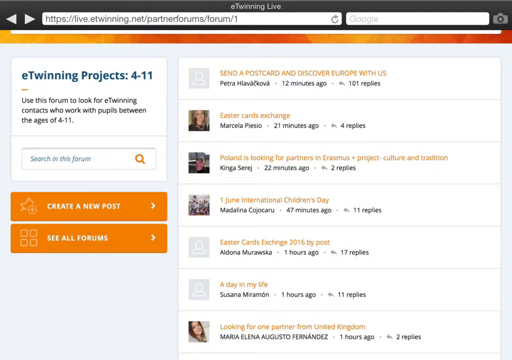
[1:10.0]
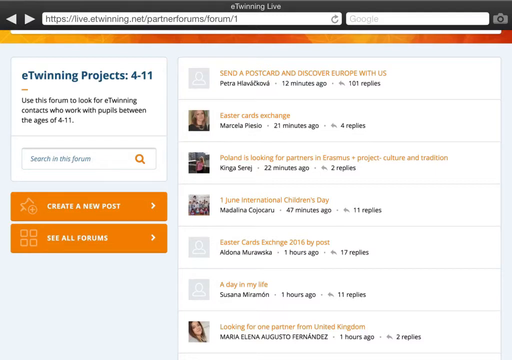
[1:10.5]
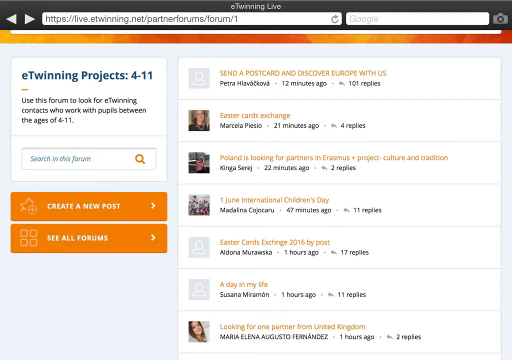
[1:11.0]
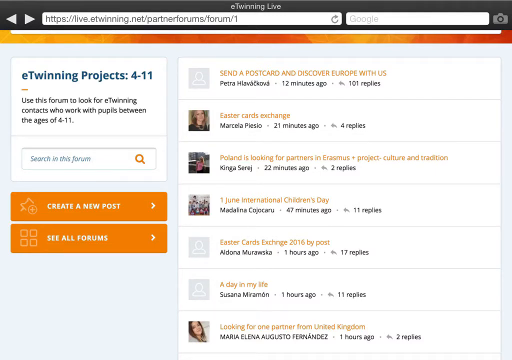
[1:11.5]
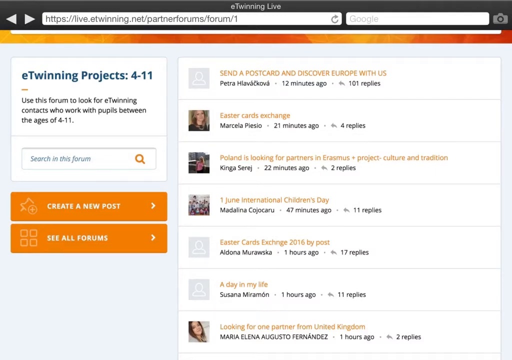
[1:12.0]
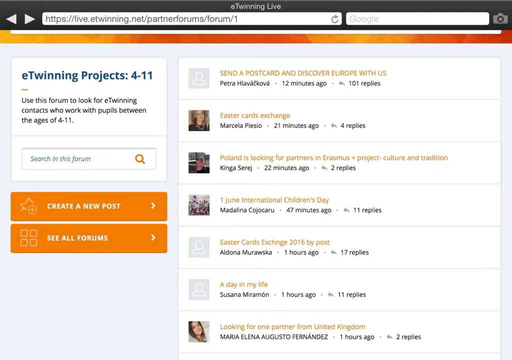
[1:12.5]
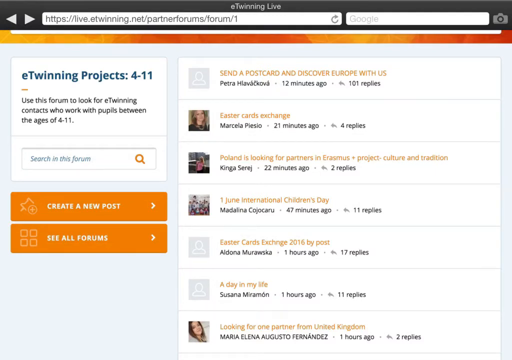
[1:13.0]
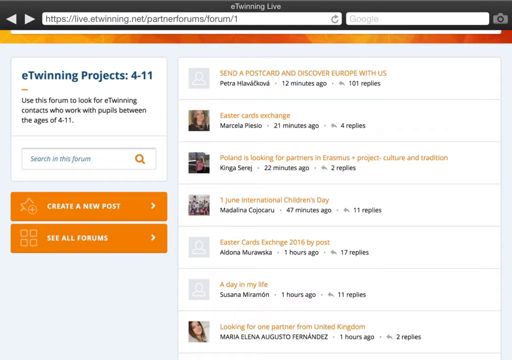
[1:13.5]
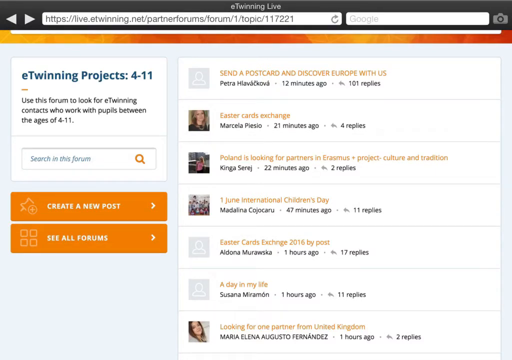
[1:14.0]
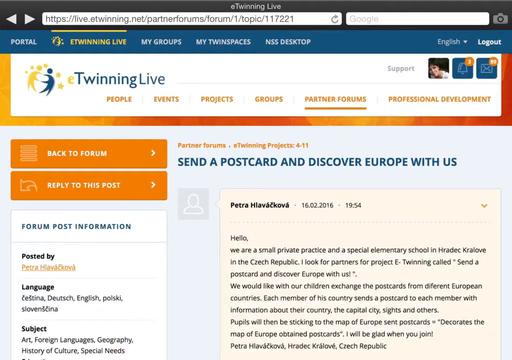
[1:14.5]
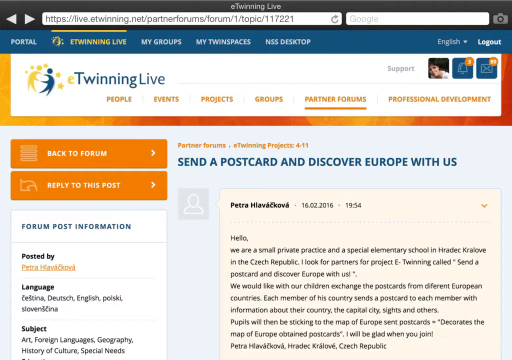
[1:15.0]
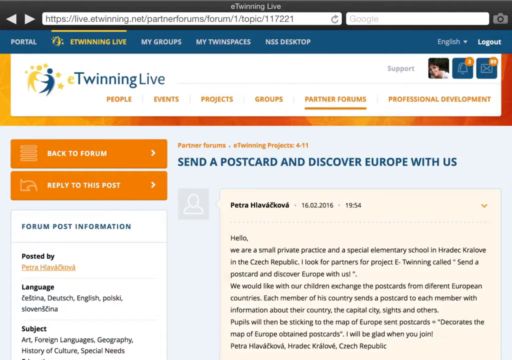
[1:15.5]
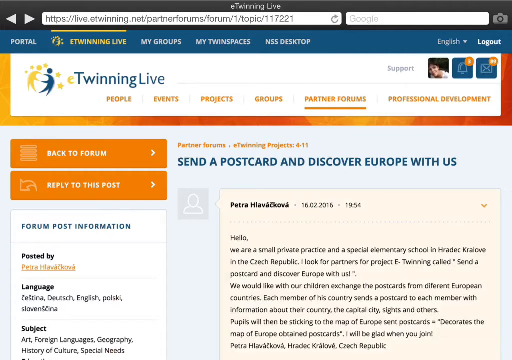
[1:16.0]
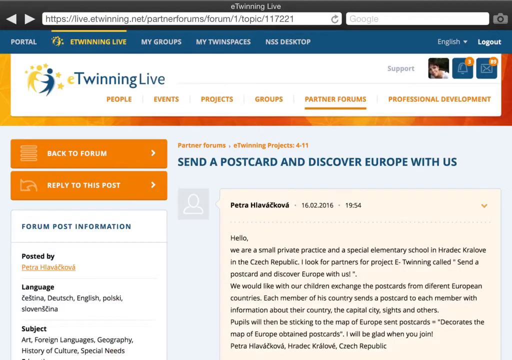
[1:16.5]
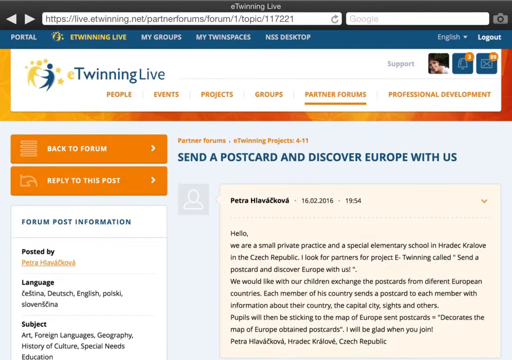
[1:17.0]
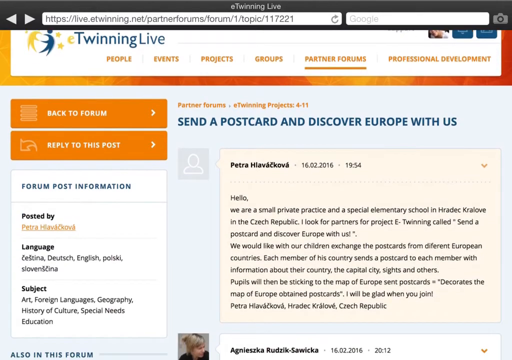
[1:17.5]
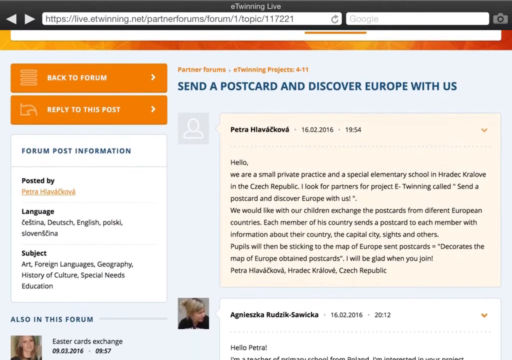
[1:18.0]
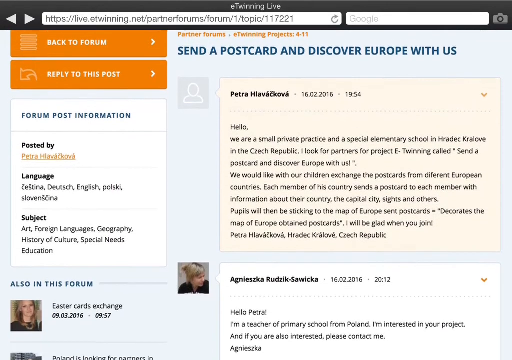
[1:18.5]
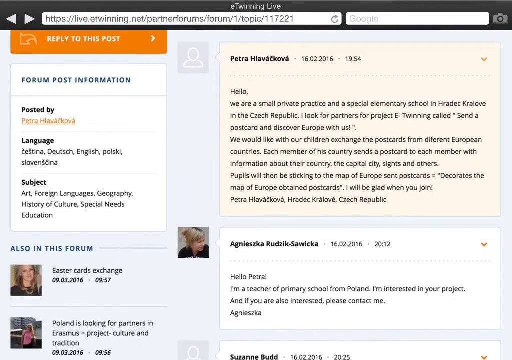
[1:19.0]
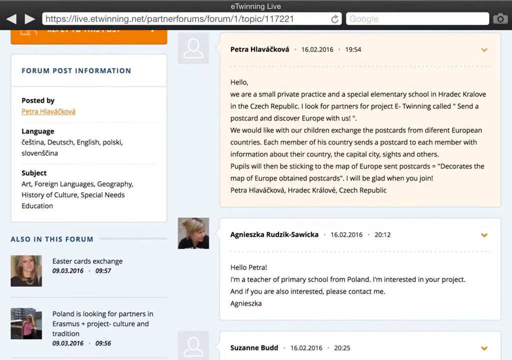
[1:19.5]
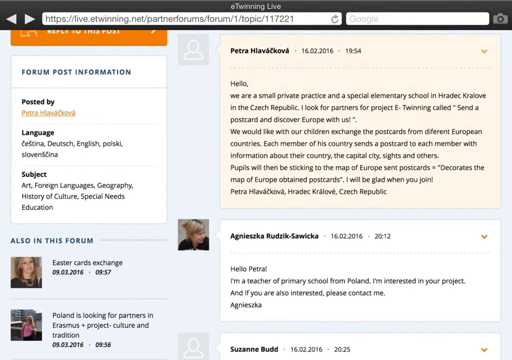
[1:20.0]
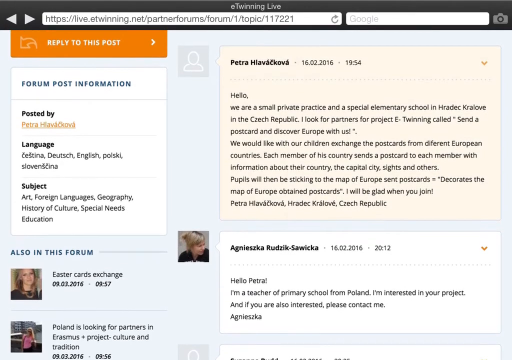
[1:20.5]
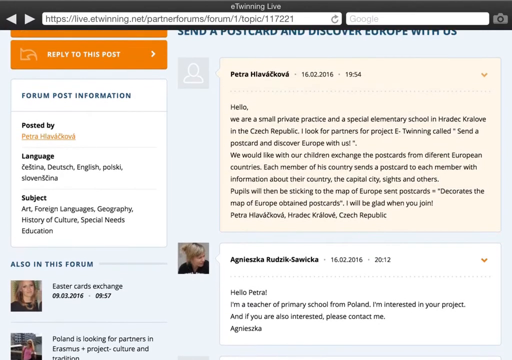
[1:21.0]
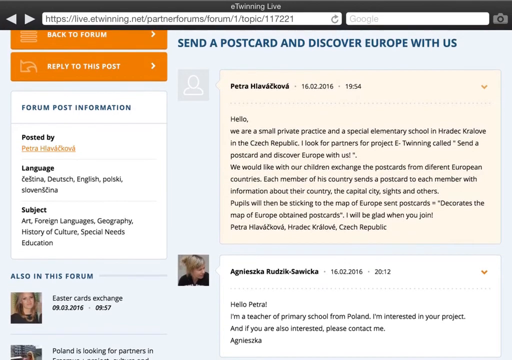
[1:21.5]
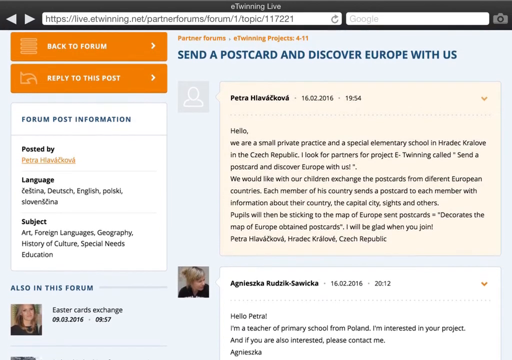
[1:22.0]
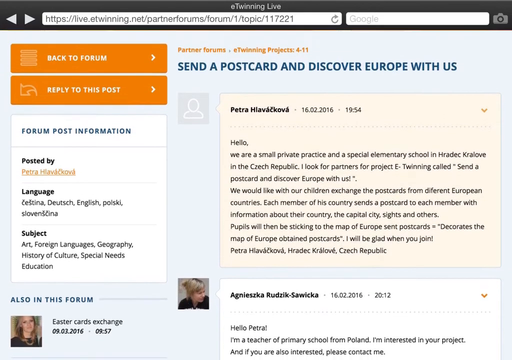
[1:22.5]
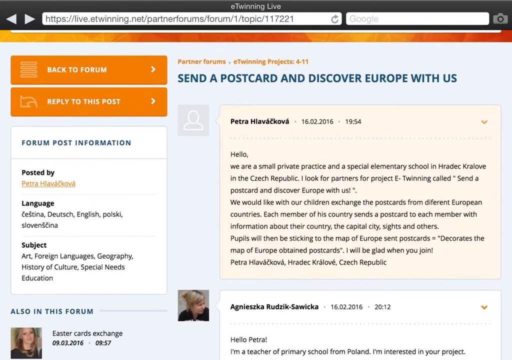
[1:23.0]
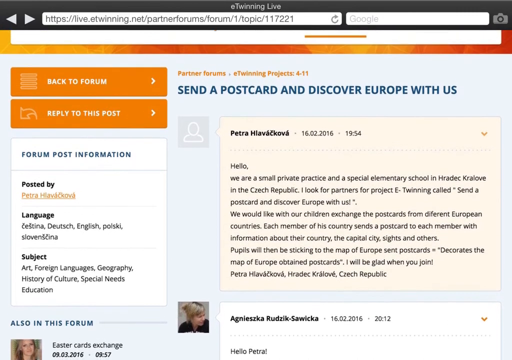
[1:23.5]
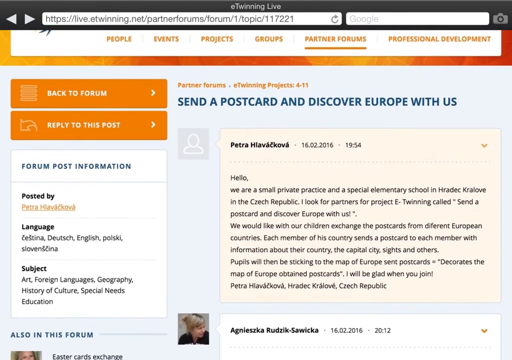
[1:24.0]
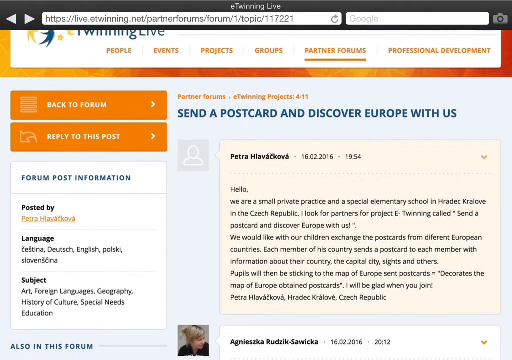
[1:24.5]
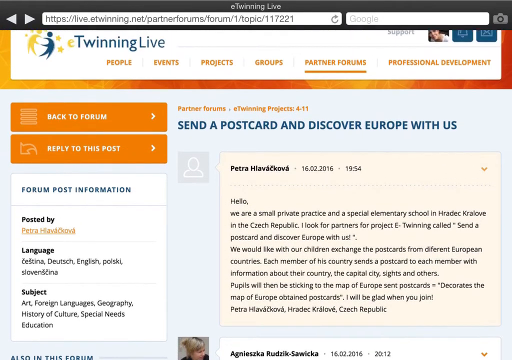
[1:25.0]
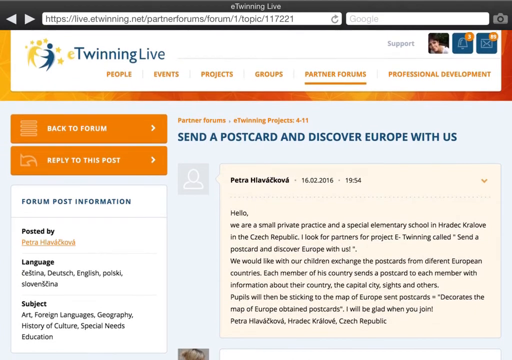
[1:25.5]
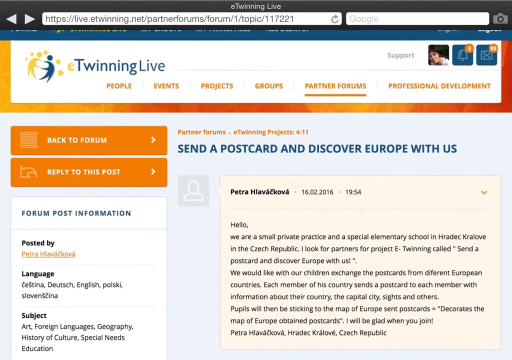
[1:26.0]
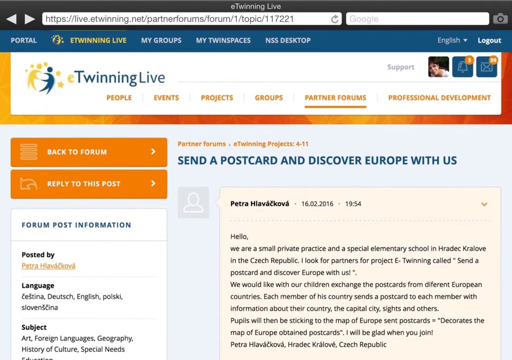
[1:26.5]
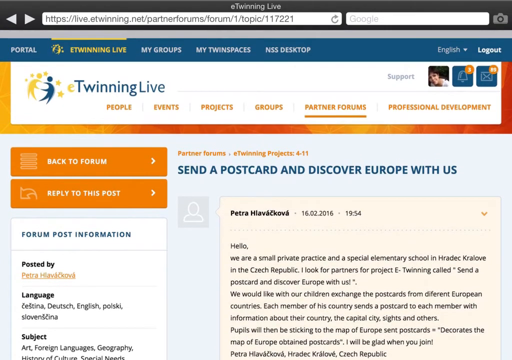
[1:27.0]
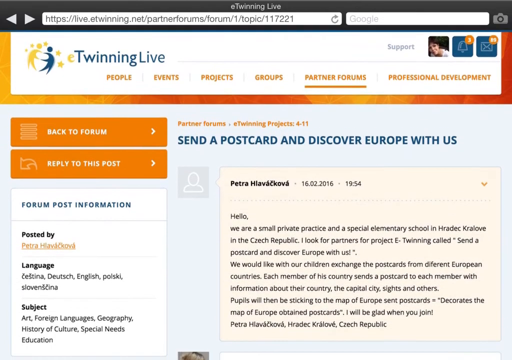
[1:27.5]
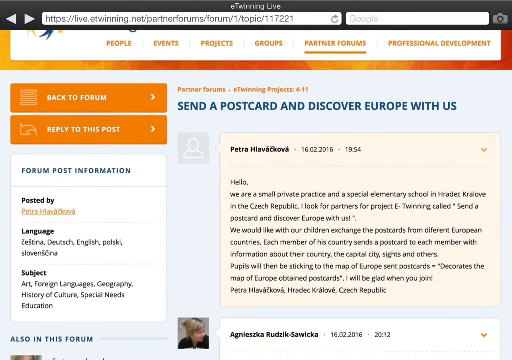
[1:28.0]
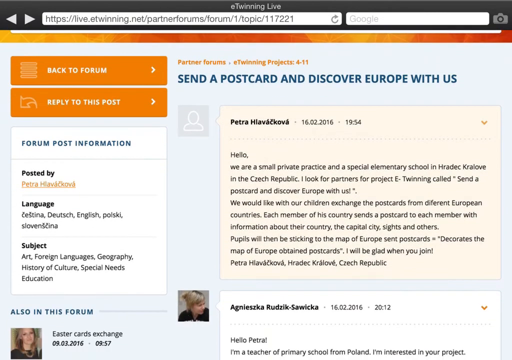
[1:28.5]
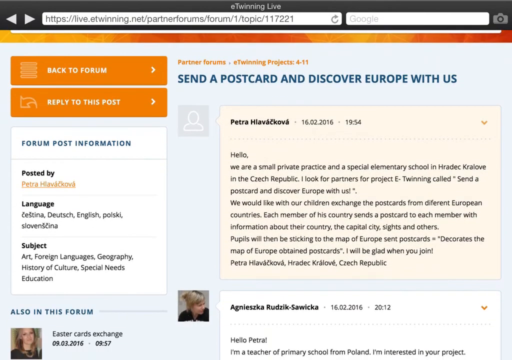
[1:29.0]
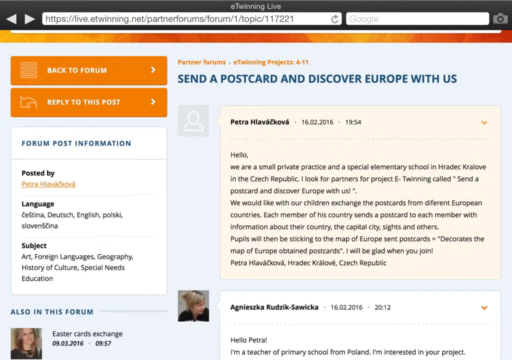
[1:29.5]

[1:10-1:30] The user is looking at a web page for one of the listed projects, apparently "send a postcard and discover Europe with us". Petra wrote "hello, we are a small private practice and a special elementary school" followed by more about the project. The page is laid out in a conversation-based forum style; there is no image for her, and her message looks like a text bubble. Scrolling down reveals responses, such as "hello, Petra, I'm a teacher of a primary school from Poland. I'm interested in your project. And if you're interested, please contact me." On the left side, information about the forum post lists the subjects "special needs education" and "foreign languages", the languages "Deutsch", "Dutch", "English" and "Polsky", and that it is posted by Petra. Below that white box, under "also in this forum", other projects appear as the user keeps scrolling down, such as "Easter cards exchange" and "Poland is looking for partners".